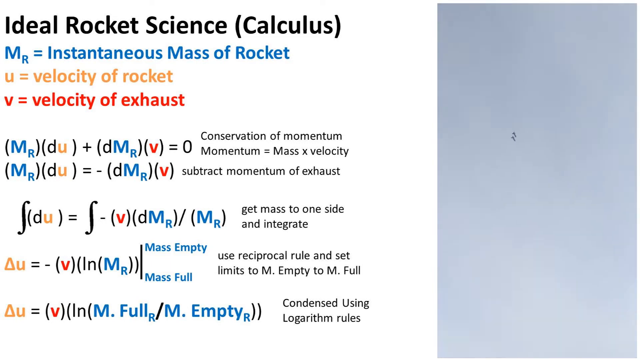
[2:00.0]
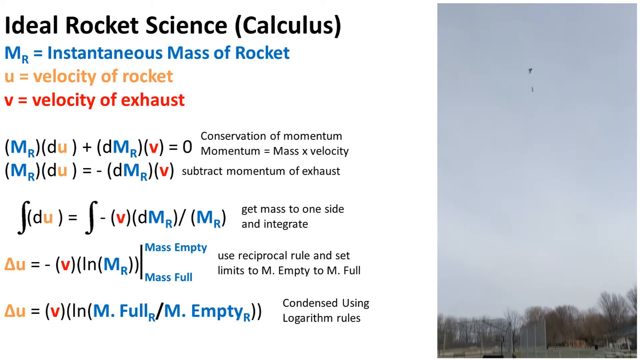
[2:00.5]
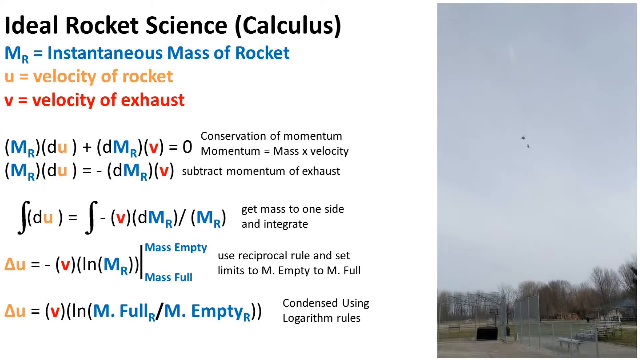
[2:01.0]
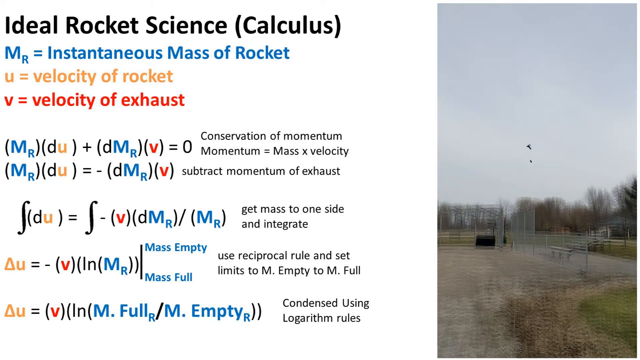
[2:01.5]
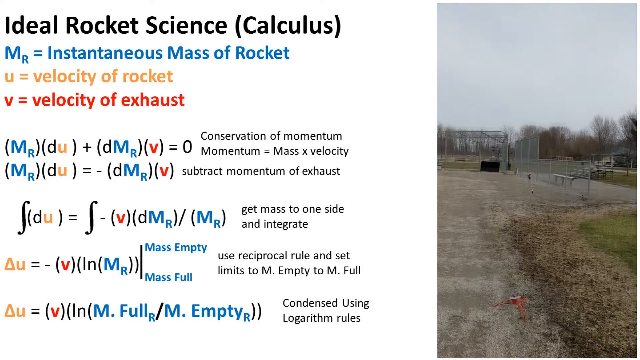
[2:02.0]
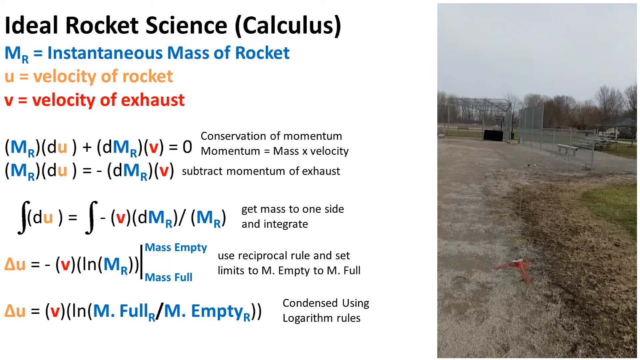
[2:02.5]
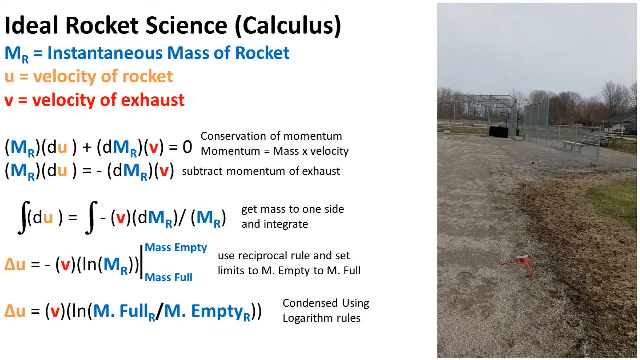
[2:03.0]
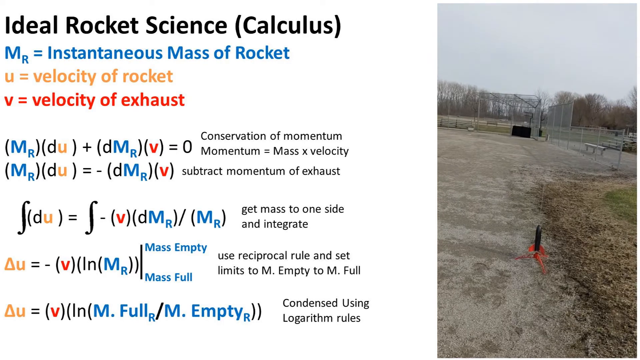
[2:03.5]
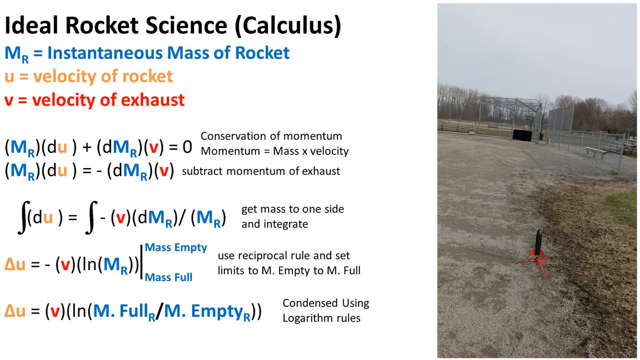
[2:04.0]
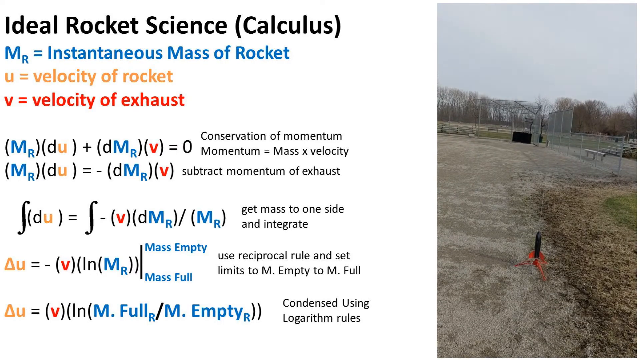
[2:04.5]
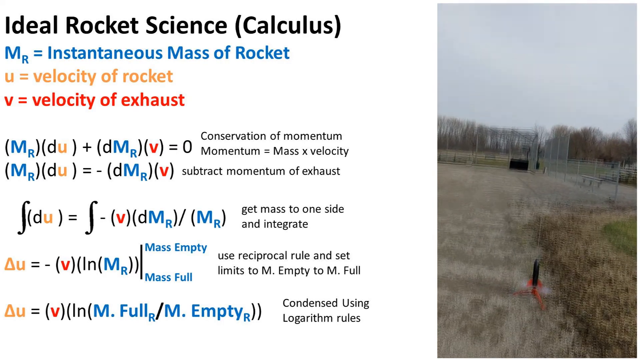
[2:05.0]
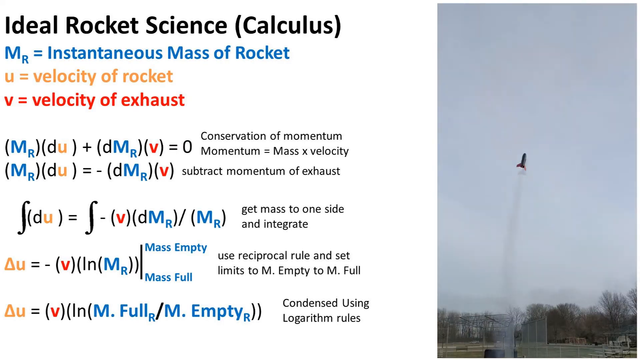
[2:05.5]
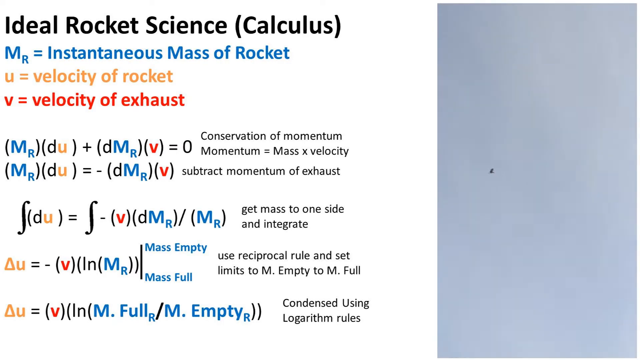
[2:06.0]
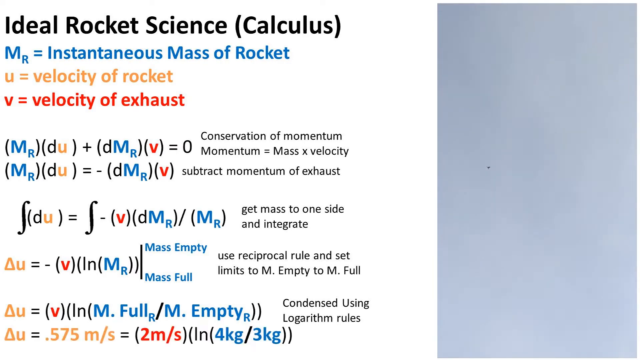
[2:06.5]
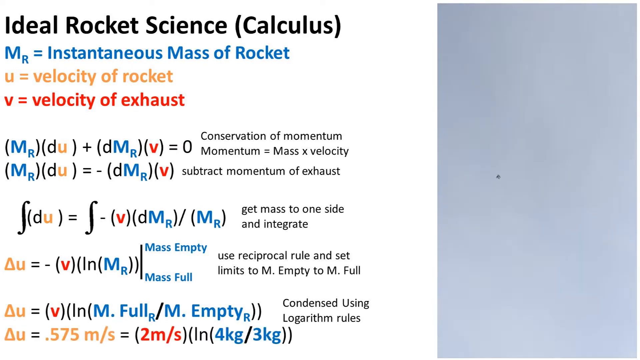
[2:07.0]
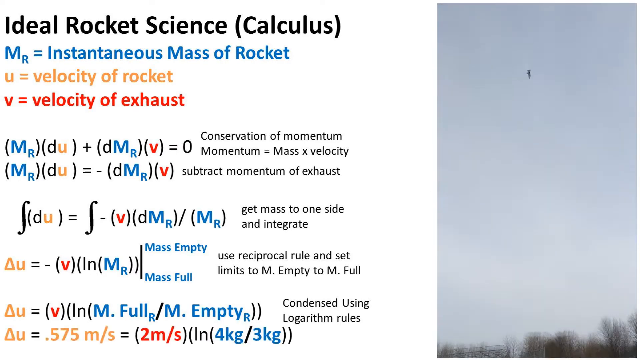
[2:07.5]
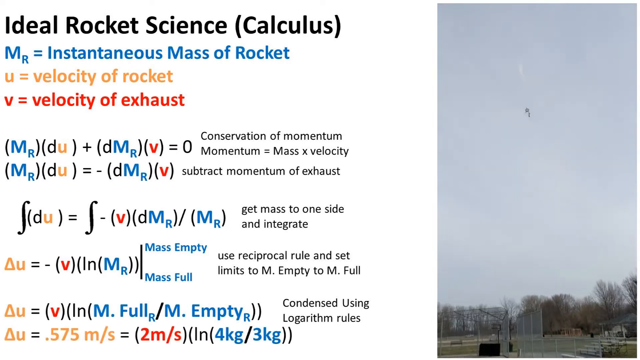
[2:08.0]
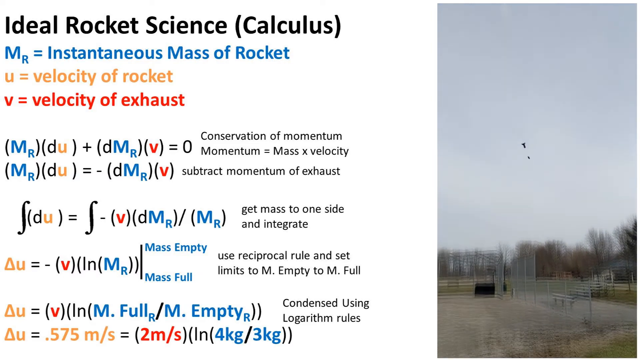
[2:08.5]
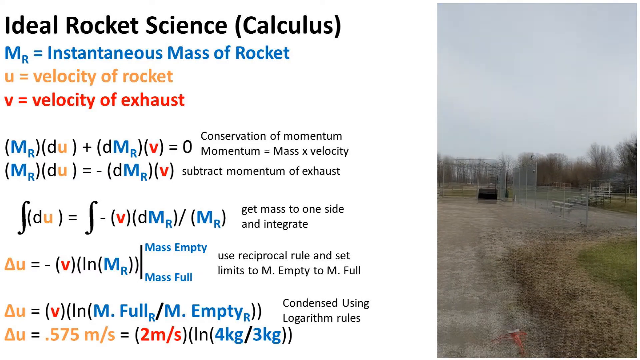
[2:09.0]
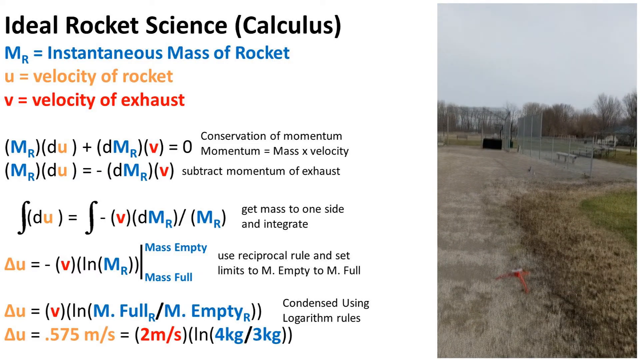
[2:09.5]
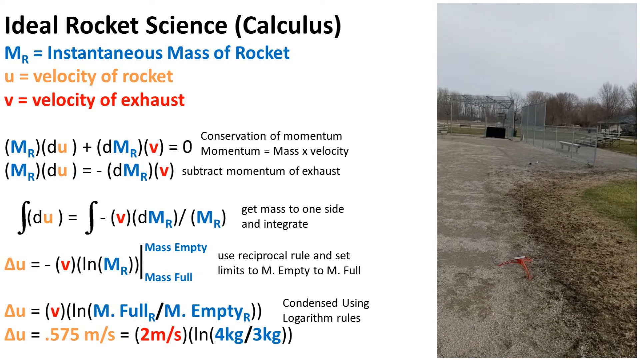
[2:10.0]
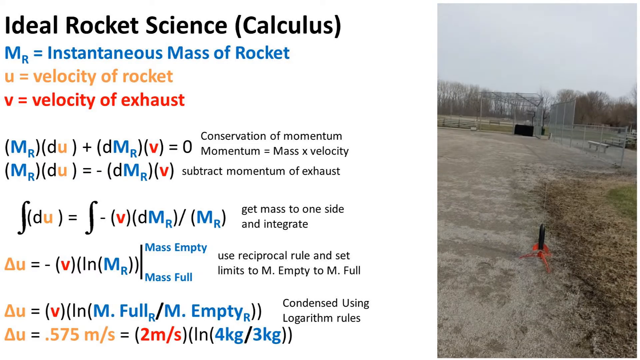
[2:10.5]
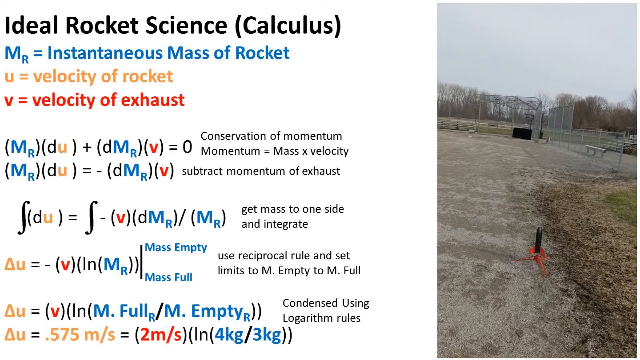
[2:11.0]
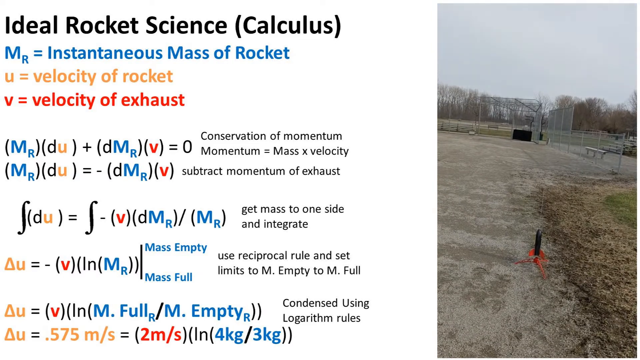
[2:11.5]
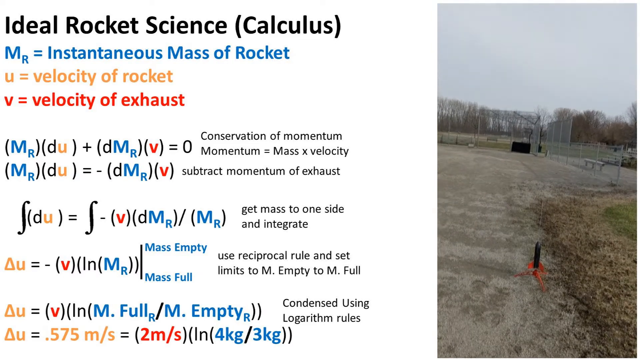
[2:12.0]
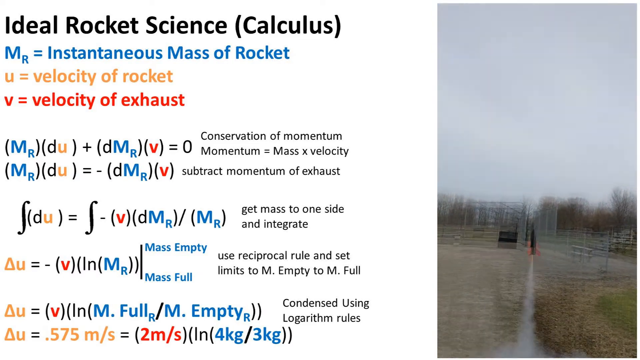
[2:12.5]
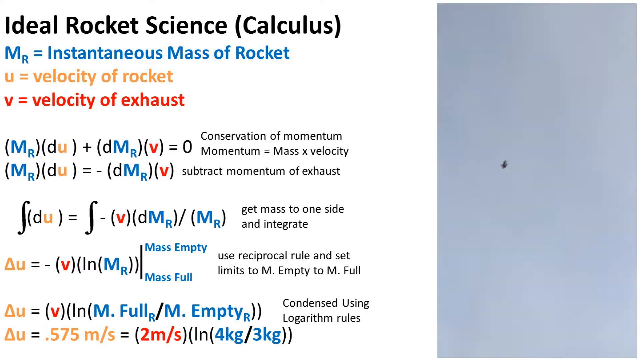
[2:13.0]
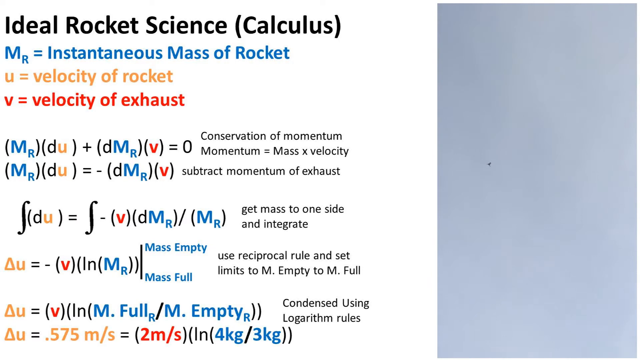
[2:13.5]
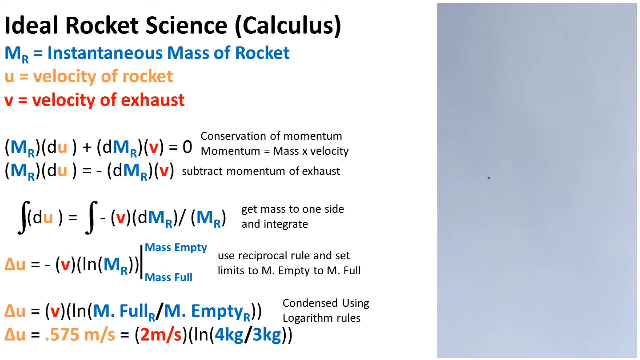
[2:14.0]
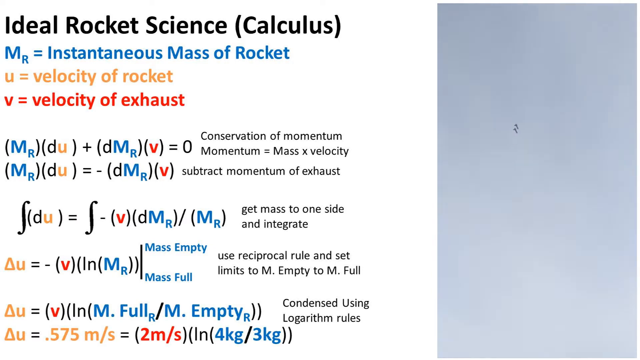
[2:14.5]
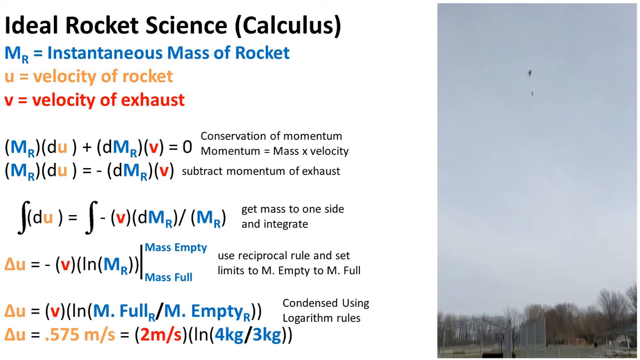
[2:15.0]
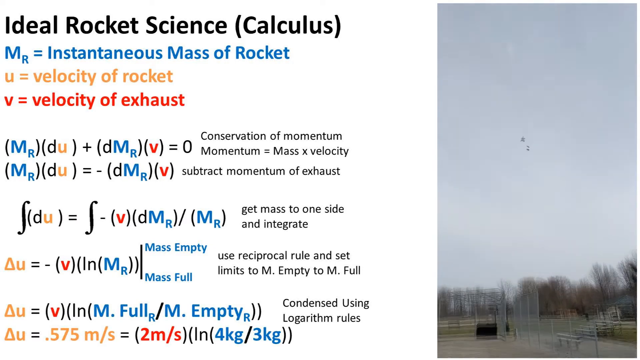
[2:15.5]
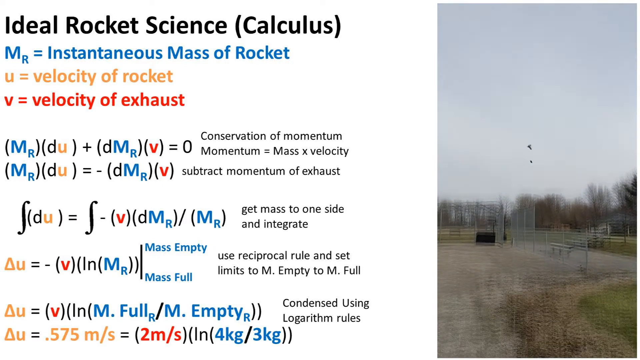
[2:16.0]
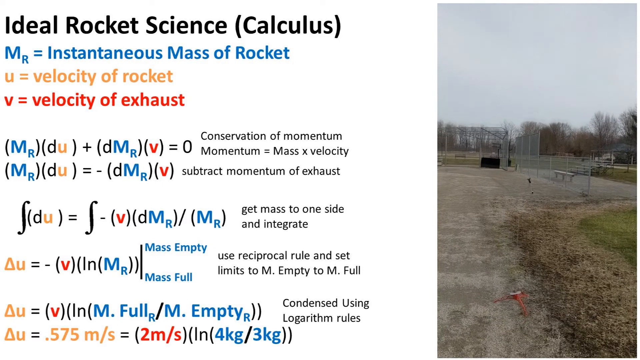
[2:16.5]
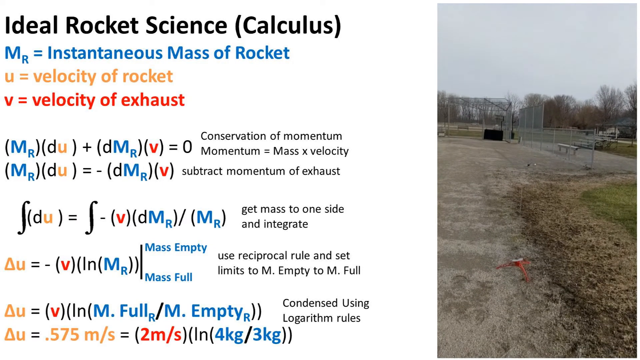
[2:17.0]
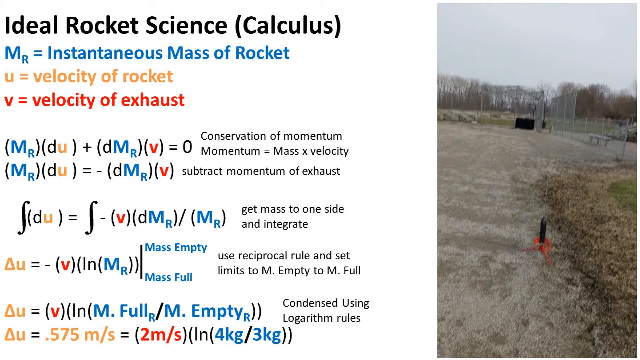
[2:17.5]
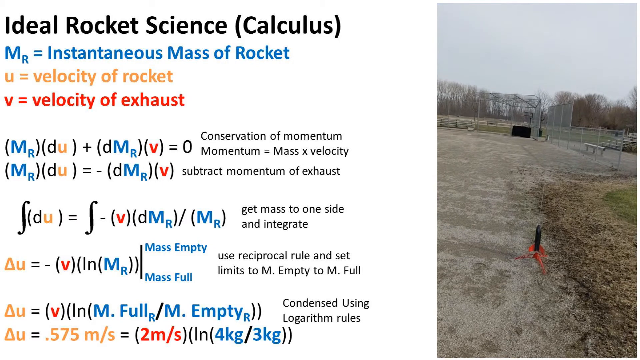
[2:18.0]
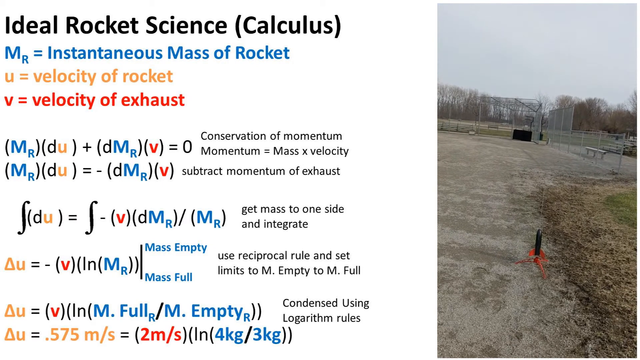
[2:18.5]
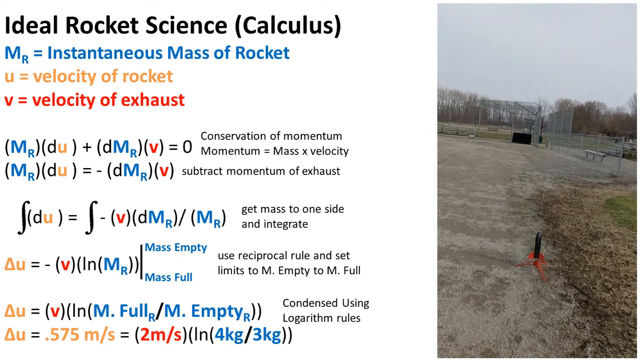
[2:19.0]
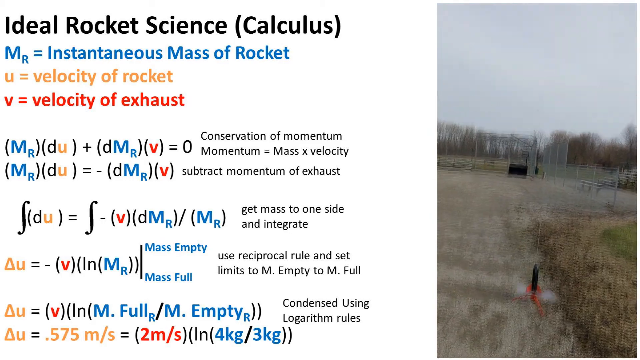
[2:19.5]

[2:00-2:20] The looping video on the right of a rocket flying into the air and falling continues, and the only new element is actual quantitative data entered into the conservation of momentum equation, showing it completed and solved after four steps in the order of operations. The three variables are the instantaneous mass of a rocket, the velocity of the rocket, and the velocity of exhaust. The mass is four kilograms full and three kilograms empty, the velocity of the rocket ends at 0.575 meters a second, and the velocity of exhaust is two meters a second. The final equation is 0.575 meters a second equals two meters a second times the integral of four kg divided by three kg, closed with two parentheses.